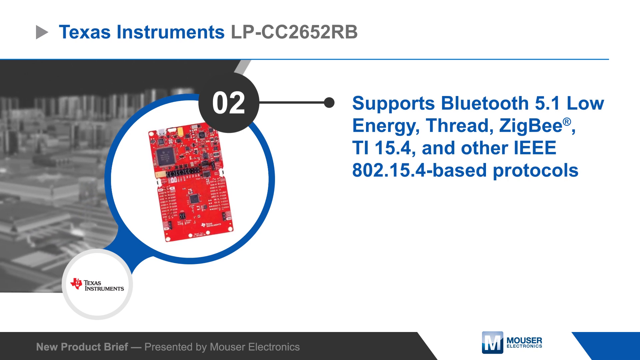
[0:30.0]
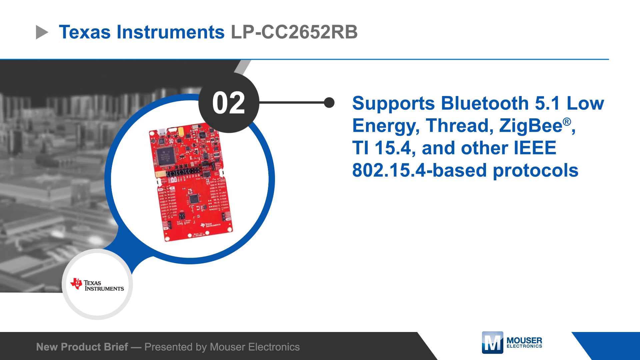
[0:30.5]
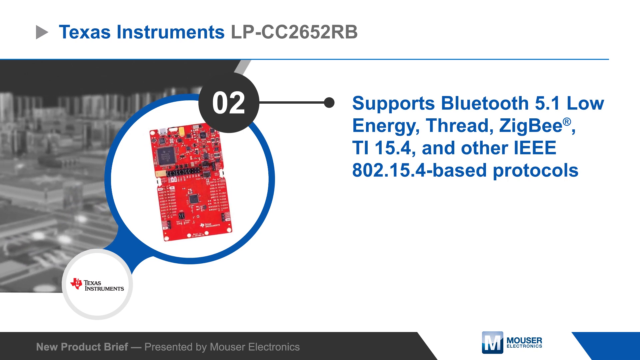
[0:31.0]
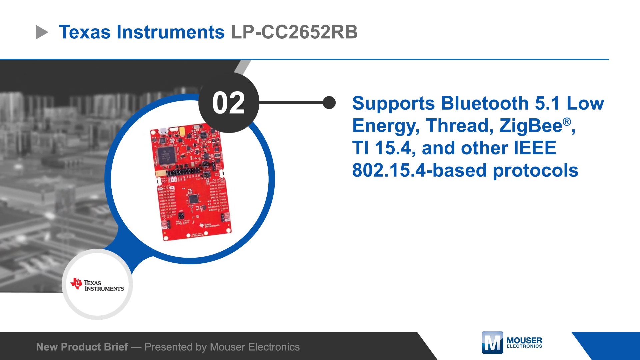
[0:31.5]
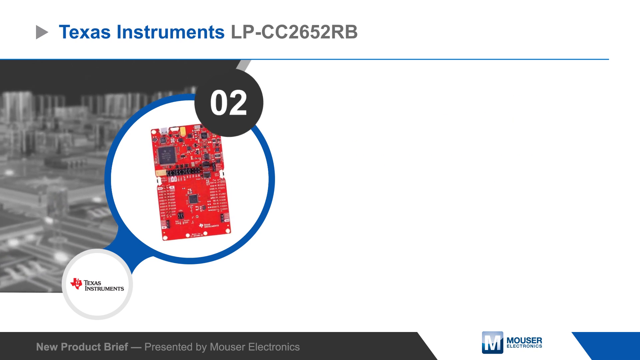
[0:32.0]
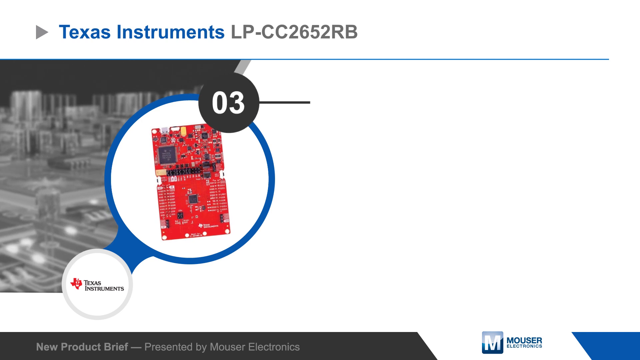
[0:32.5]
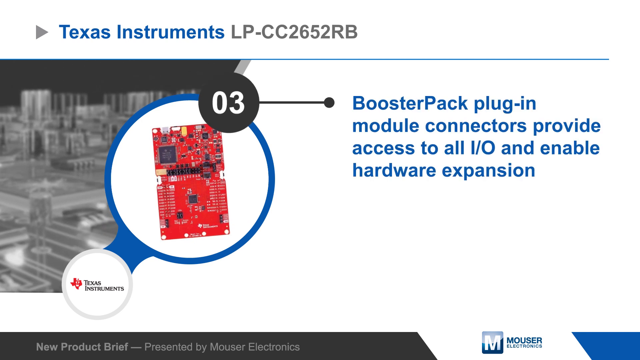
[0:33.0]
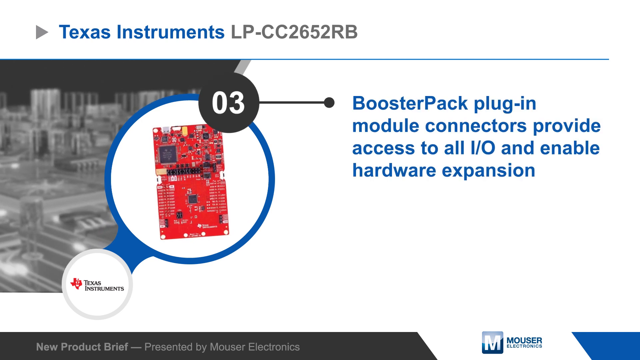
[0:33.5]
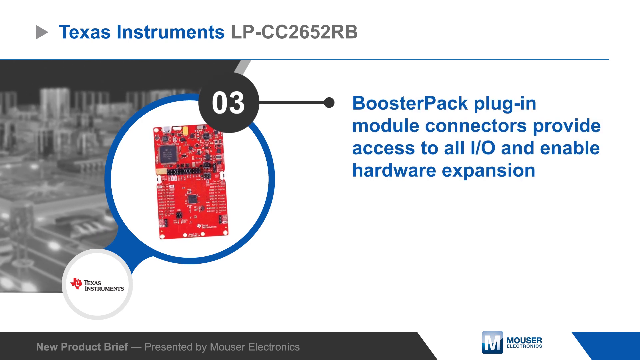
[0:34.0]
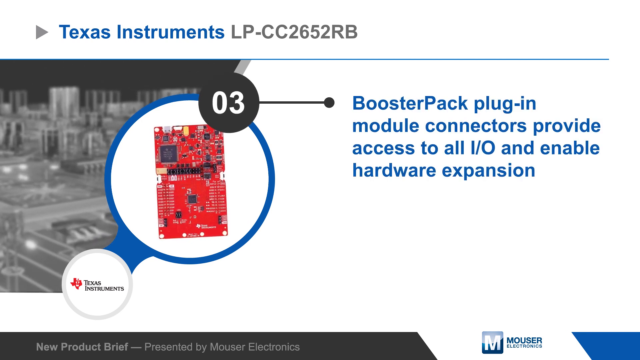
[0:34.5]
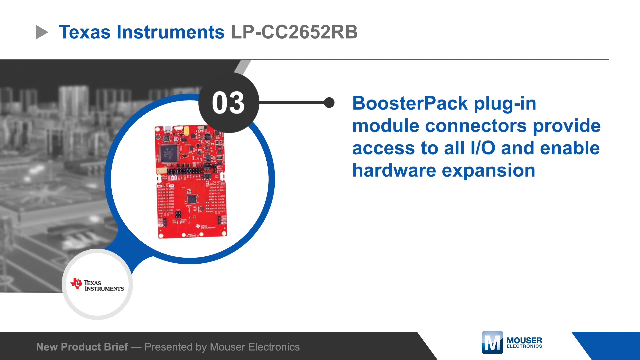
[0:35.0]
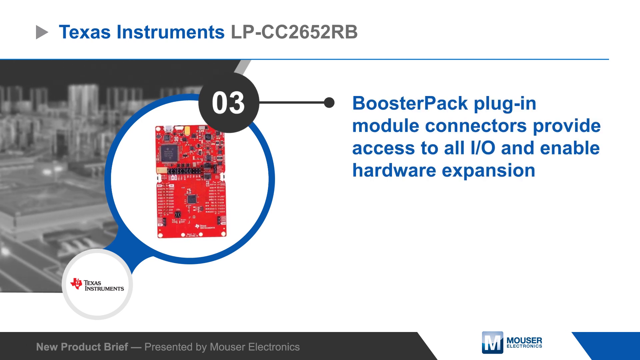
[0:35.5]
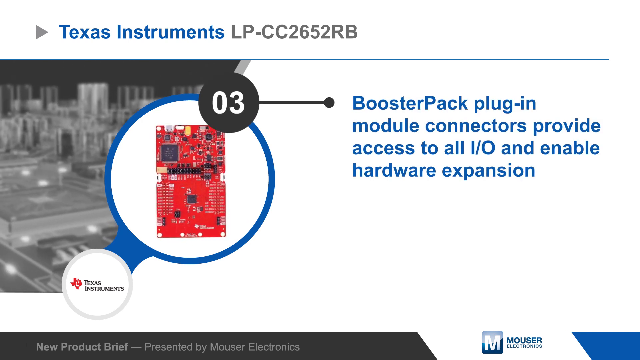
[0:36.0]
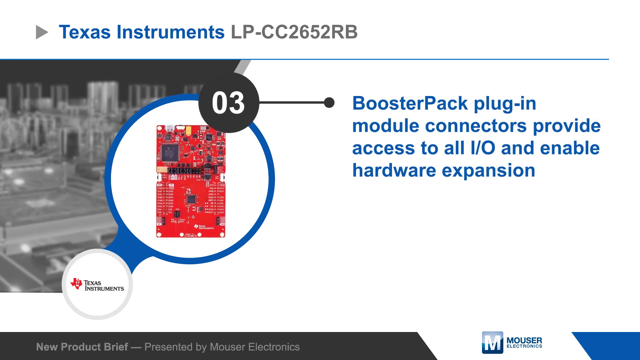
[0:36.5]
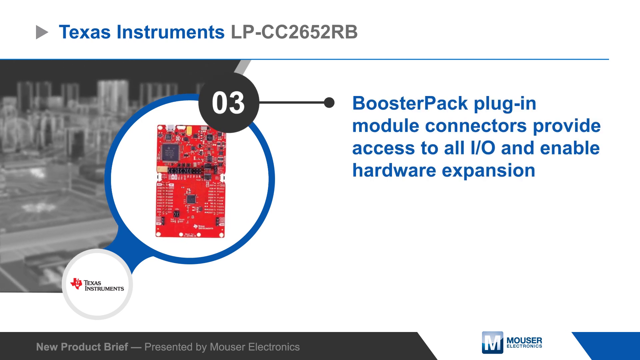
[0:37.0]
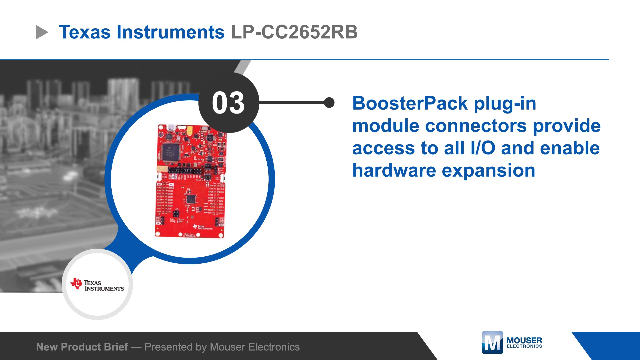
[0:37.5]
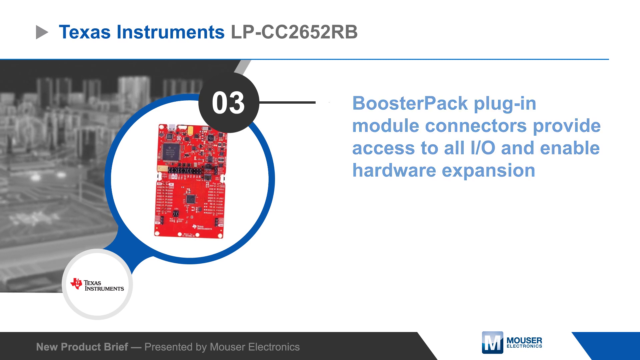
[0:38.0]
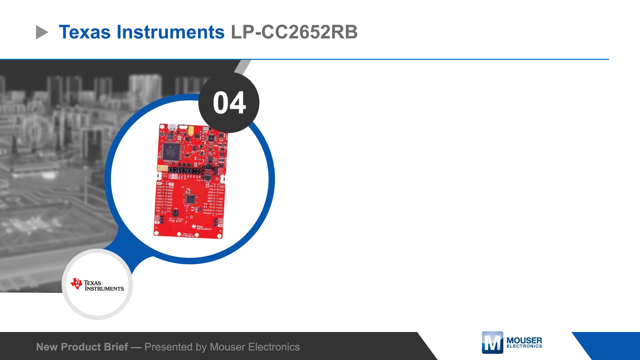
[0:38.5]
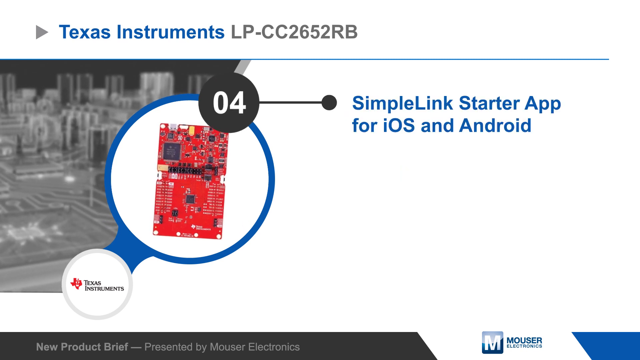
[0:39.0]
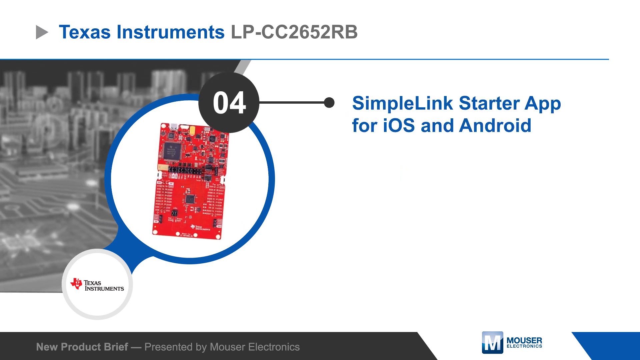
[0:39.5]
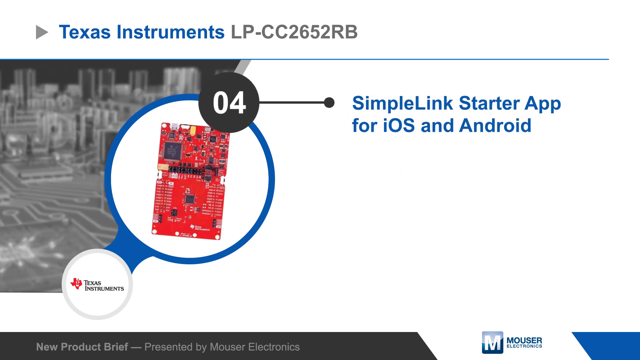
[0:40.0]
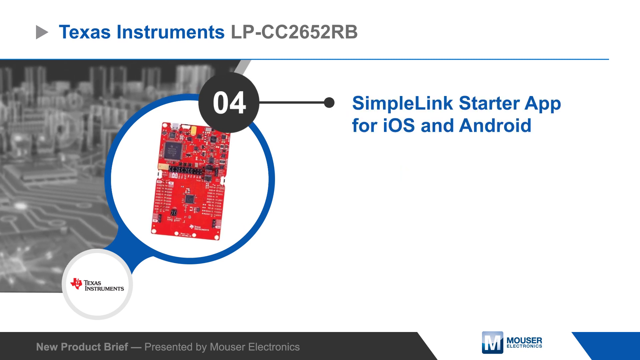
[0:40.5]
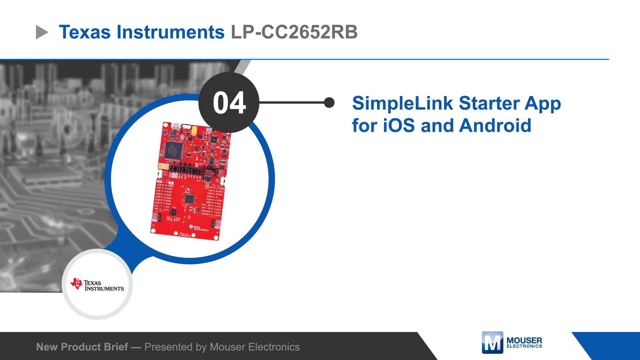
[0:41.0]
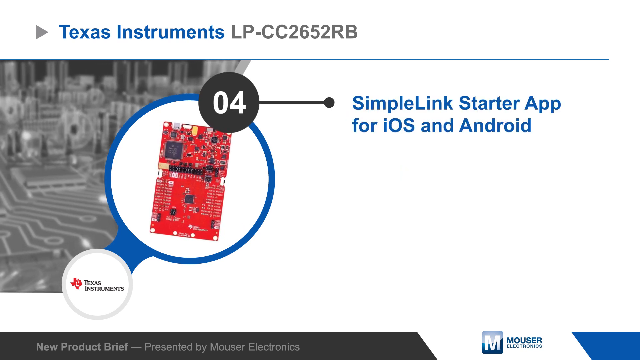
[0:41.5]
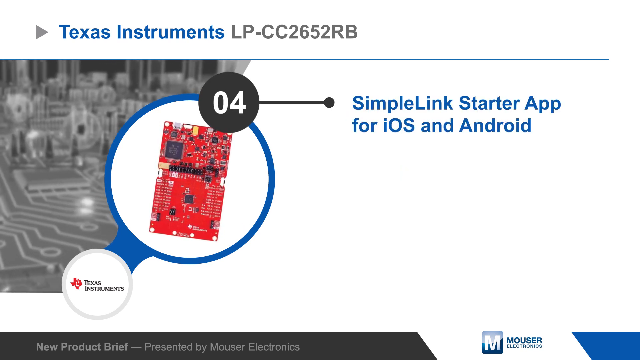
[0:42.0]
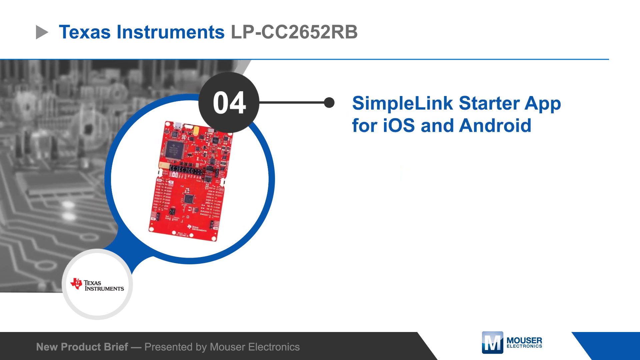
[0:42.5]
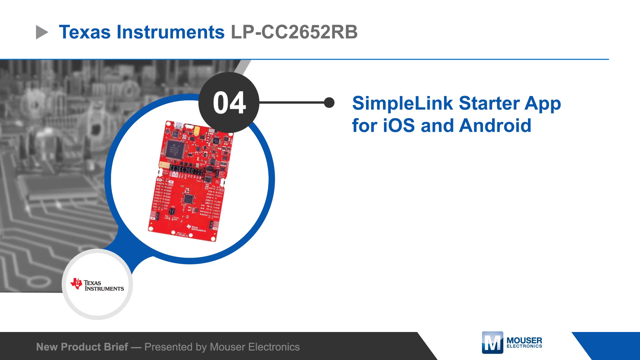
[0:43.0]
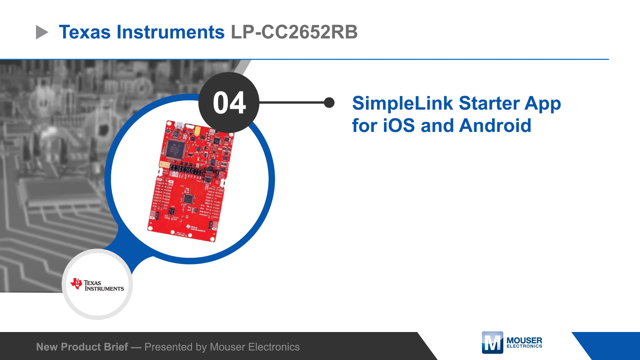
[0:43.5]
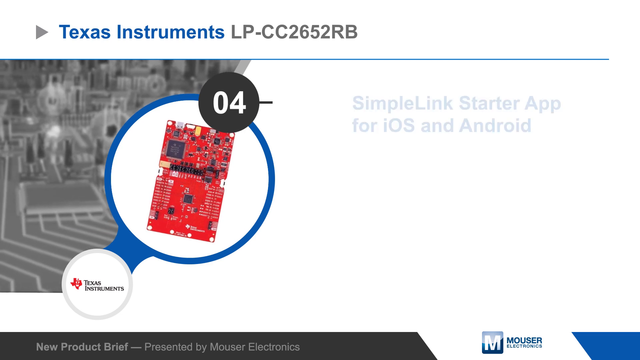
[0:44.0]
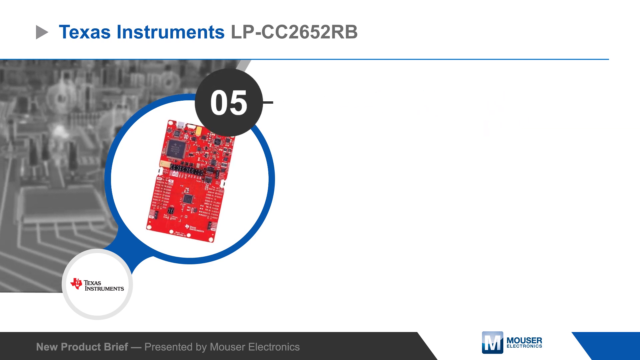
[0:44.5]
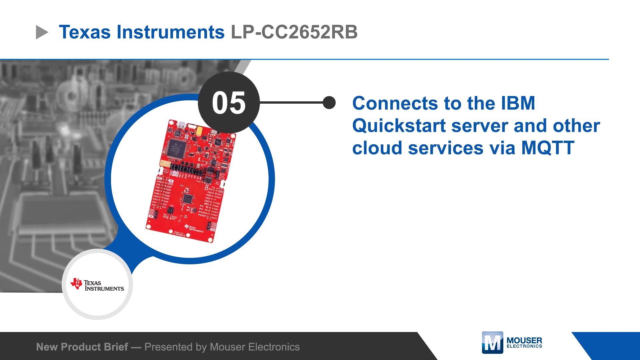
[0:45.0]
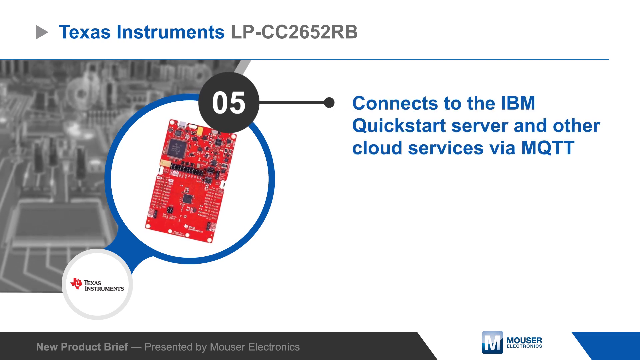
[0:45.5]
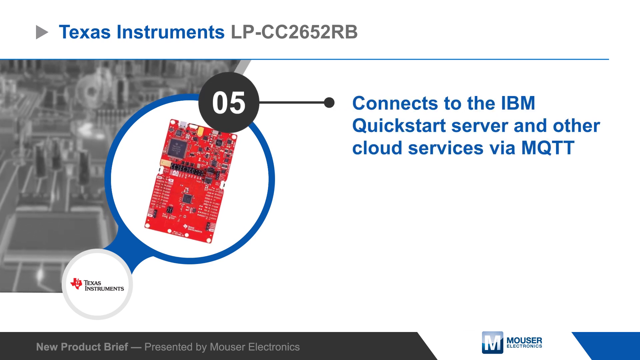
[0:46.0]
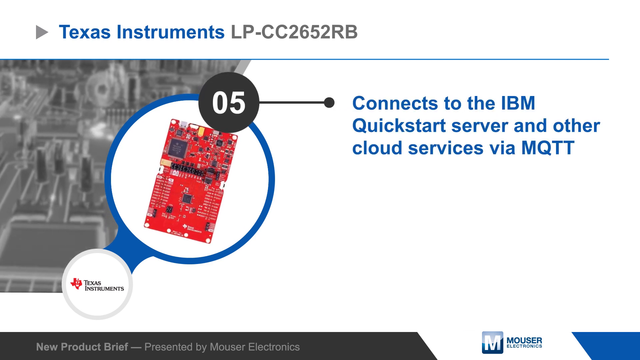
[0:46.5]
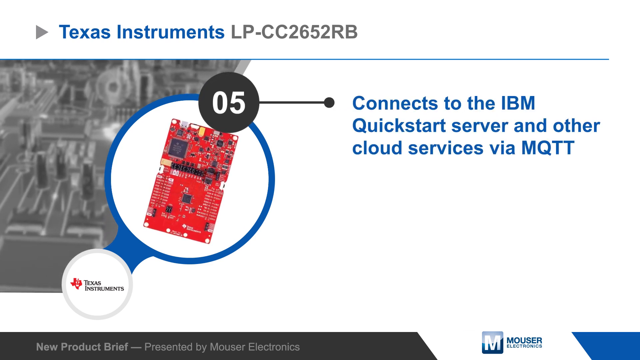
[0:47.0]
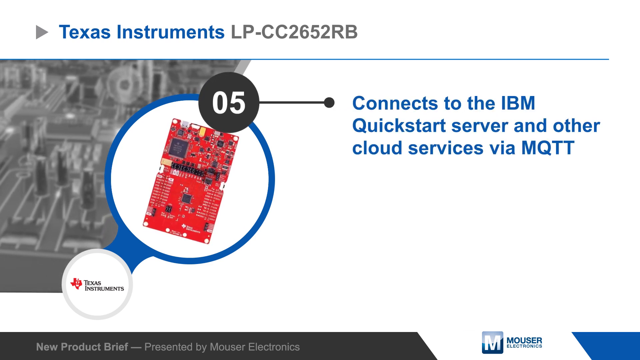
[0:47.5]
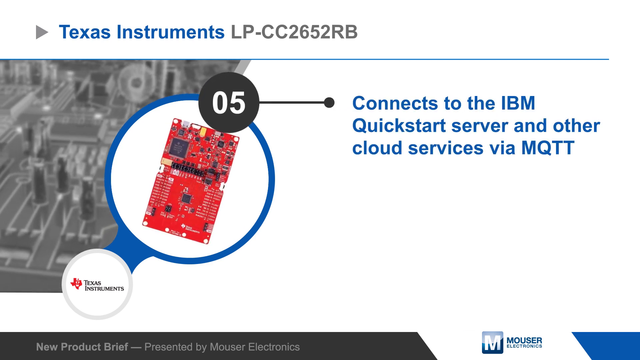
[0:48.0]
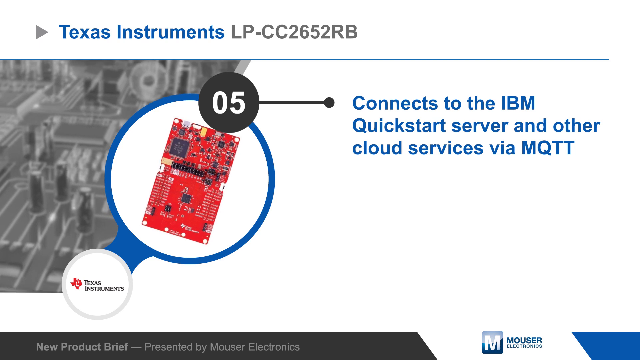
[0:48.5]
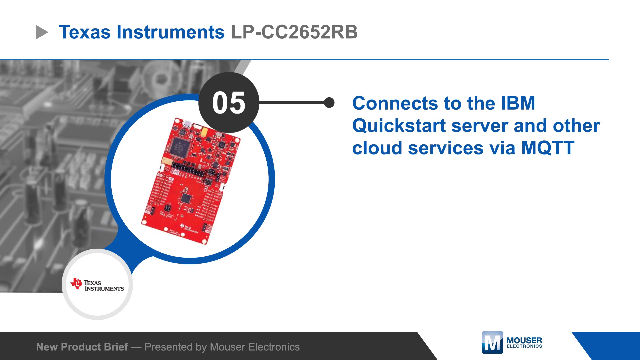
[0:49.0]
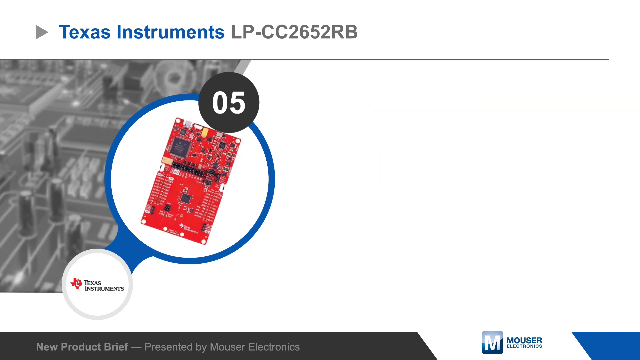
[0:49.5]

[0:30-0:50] The next slide has a number 2 inside a black circle and shows that the chipset supports Bluetooth 5.1, low energy, Thread ZigBee, TI 15.4 and other IEEE 502.15 based protocols. The third slide lists more specifications: BoosterPack plug-in module connectors that provide access to all I/O and enable hardware expansion. The final fourth slide says "SimpleLink Starter App for iOS and Android." At the bottom of the presentation, the title "New Product Brief" is written in gray on a black banner, followed by the Mouser Electronics logo, a blue square with a white M in it, over a white background. A tiny blue corner marks the bottom right of the screen.